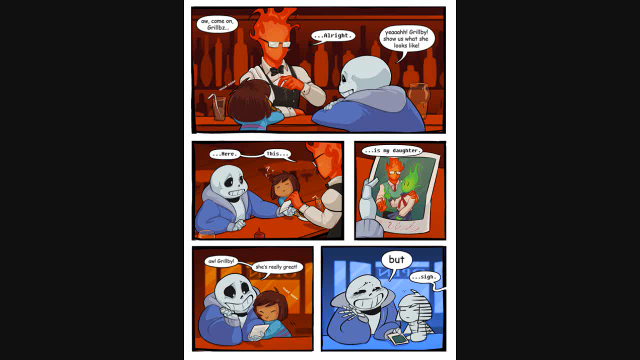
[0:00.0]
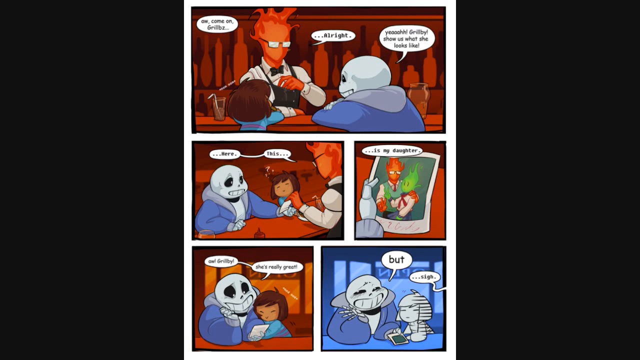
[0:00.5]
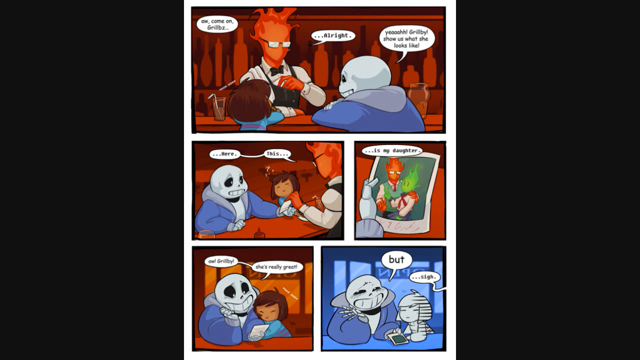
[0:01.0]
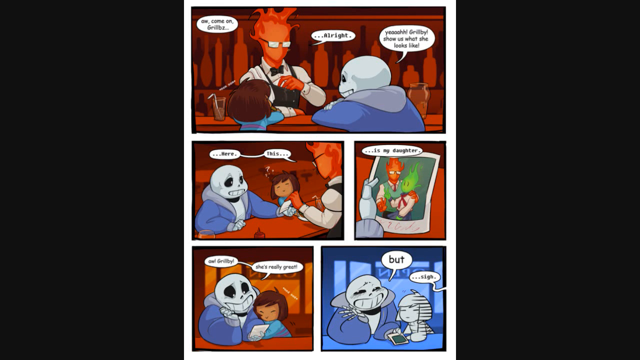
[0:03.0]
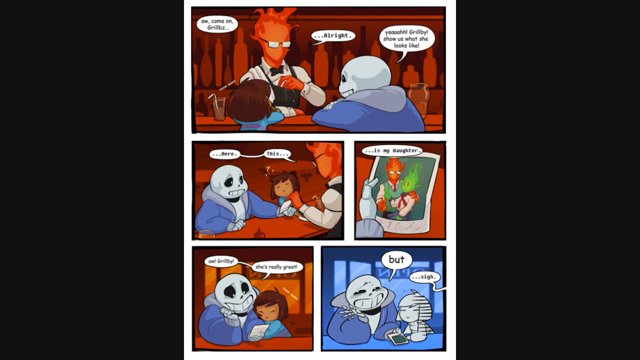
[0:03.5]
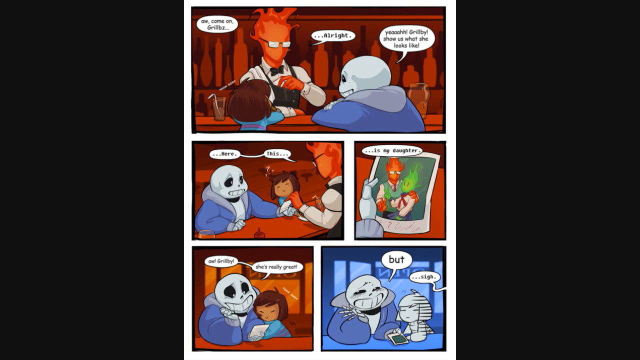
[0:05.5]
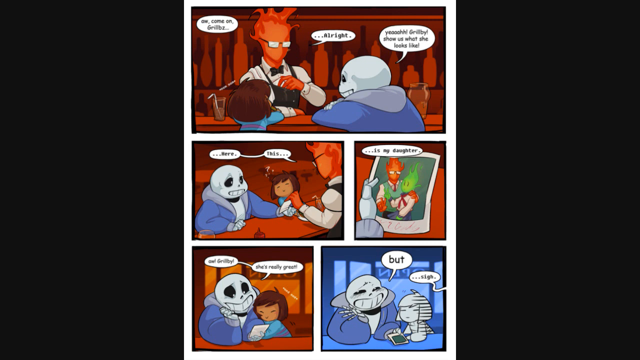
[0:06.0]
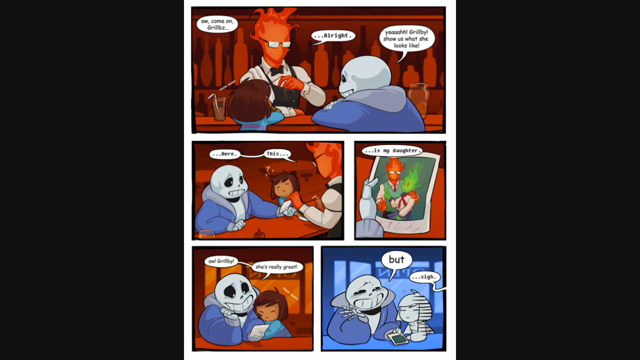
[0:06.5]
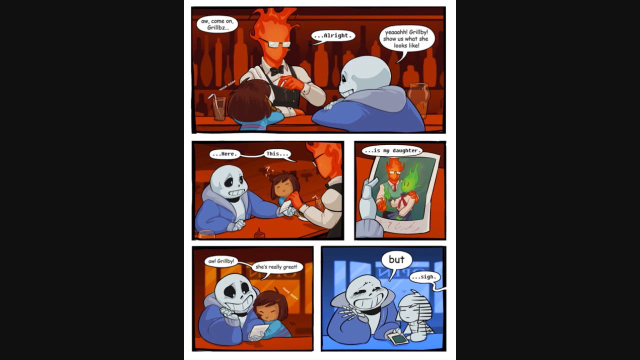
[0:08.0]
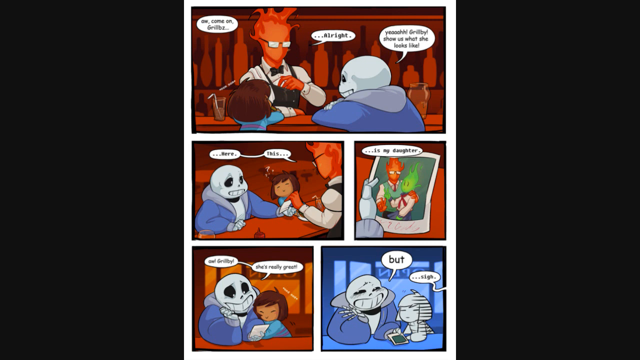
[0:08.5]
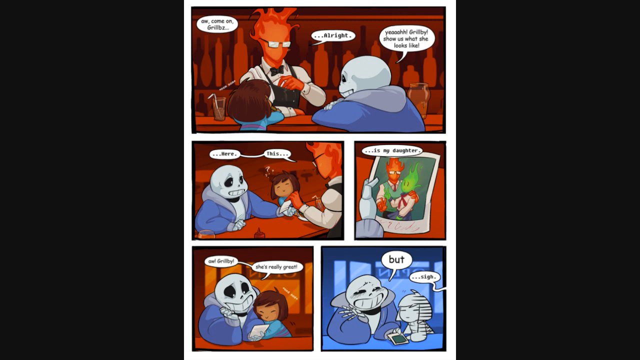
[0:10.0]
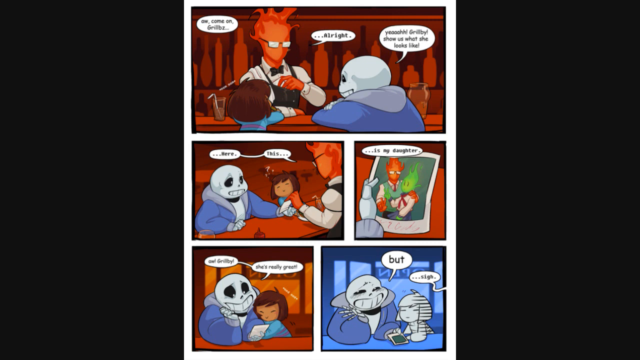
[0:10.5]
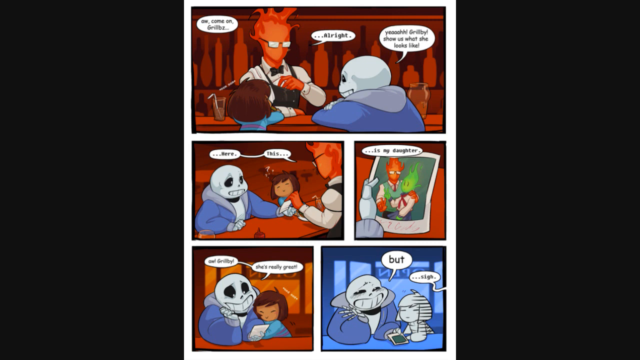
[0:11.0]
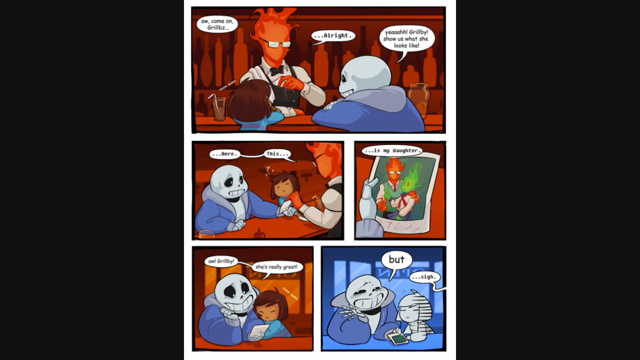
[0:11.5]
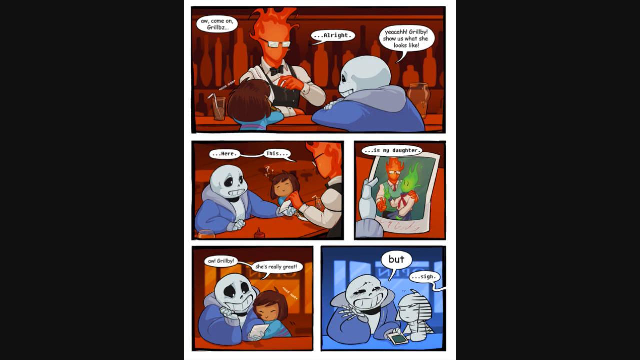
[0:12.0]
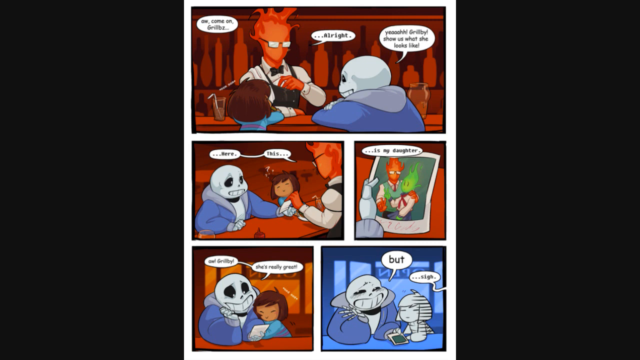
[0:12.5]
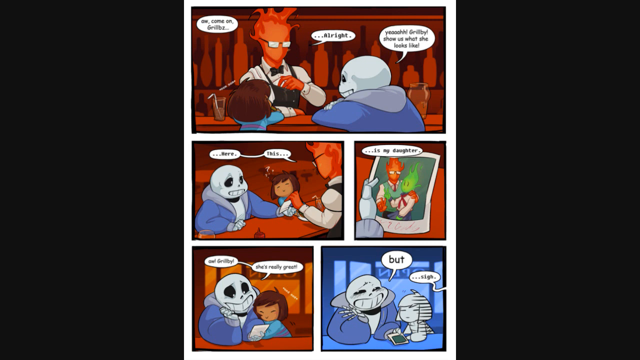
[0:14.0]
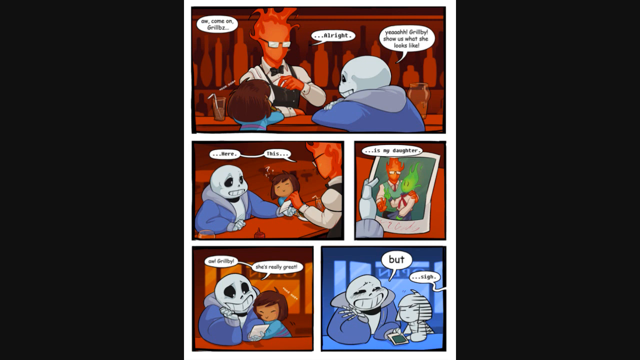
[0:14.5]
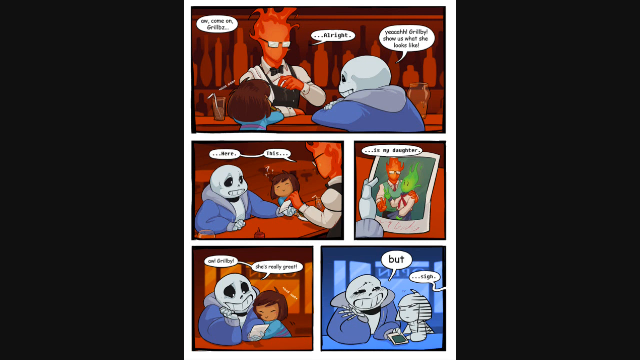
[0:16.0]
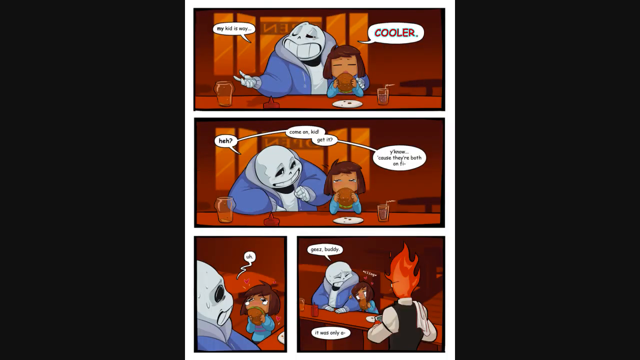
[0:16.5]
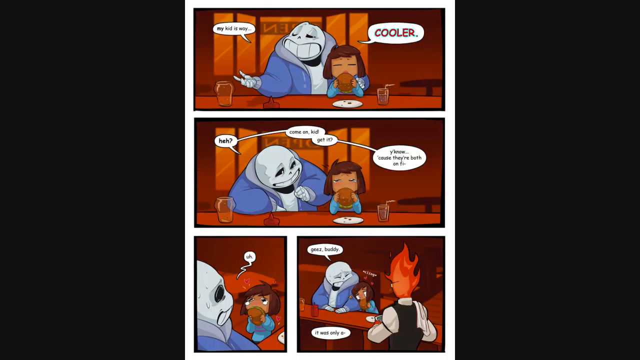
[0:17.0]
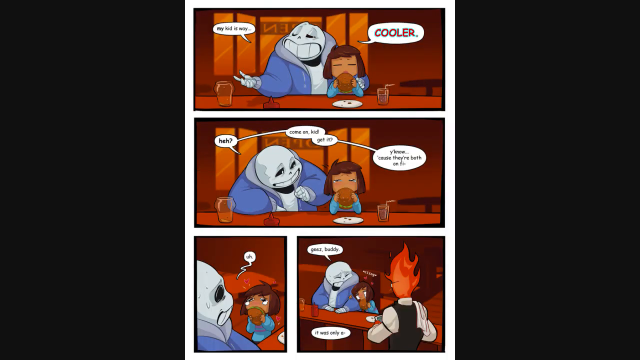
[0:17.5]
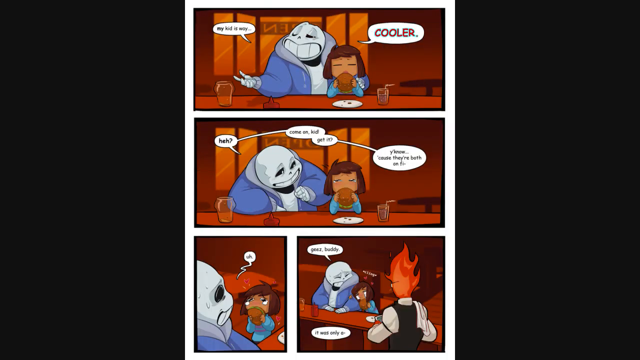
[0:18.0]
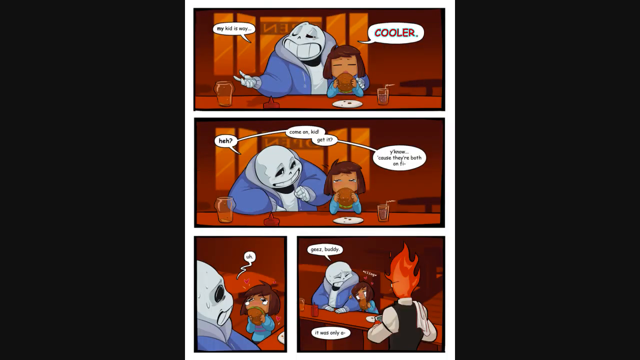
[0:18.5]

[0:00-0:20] A comic strip shows three main individuals who seem to be having a genuine conversation with each other. One of them asks the bartender to reveal something, and they all seem keen as they urge him to show them. The bartender eventually gives in and shows them a photograph of himself and his daughter, mentioning that this is his daughter and himself. The friend who takes the photo admires both him and the daughter, and they compliment the daughter, saying that she is great. A friend then makes a joke, a play on words, saying that his kid is cooler, in reference to the bartender and his daughter being made of fire.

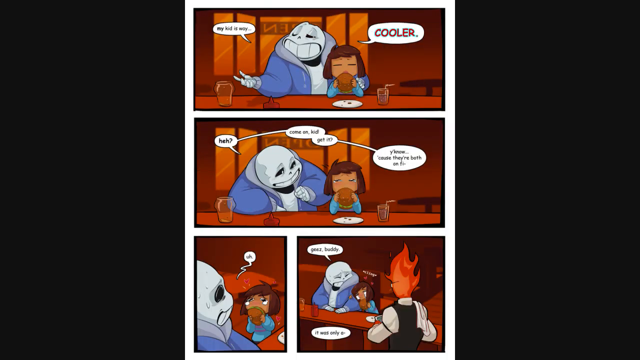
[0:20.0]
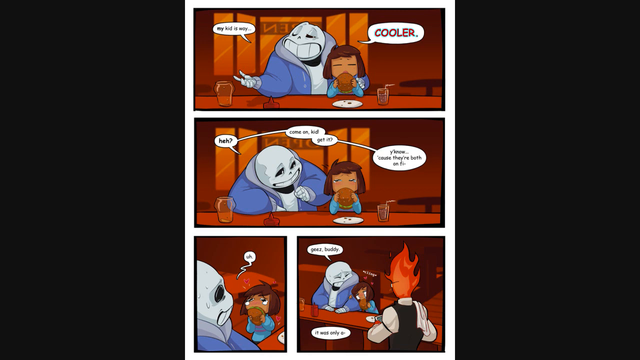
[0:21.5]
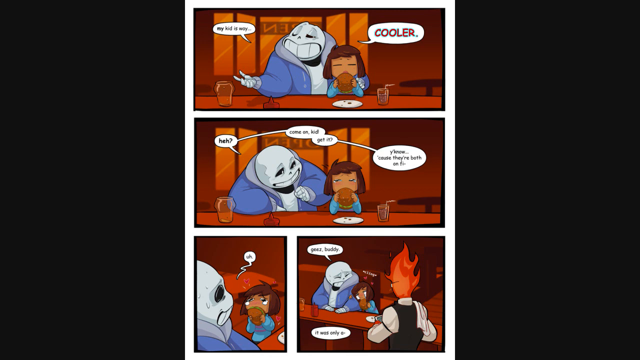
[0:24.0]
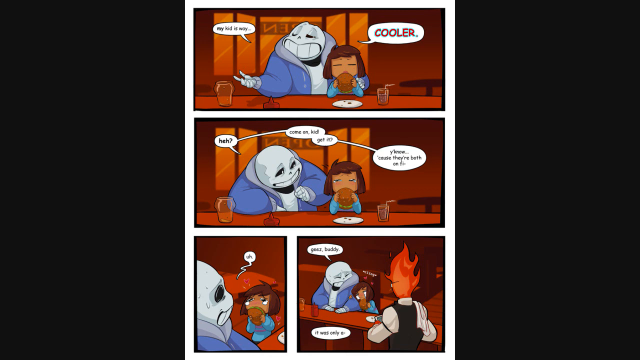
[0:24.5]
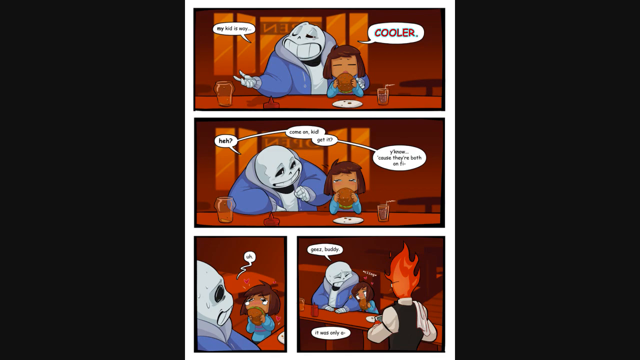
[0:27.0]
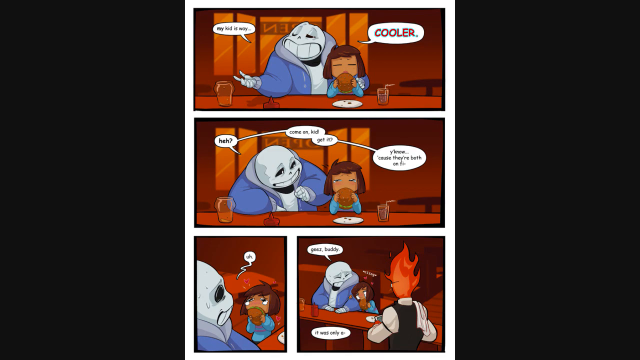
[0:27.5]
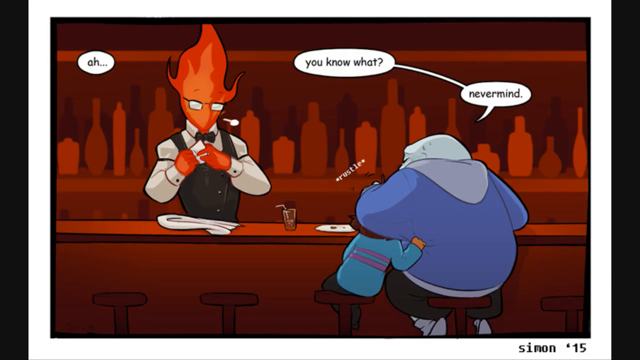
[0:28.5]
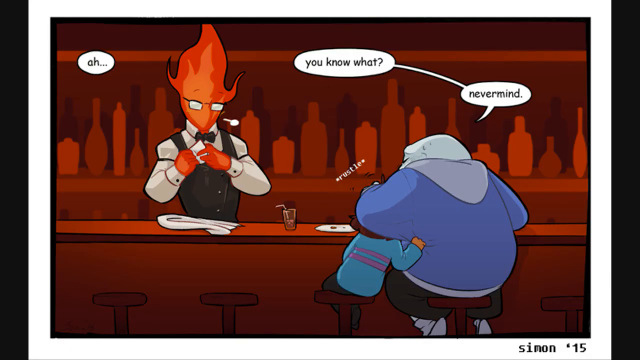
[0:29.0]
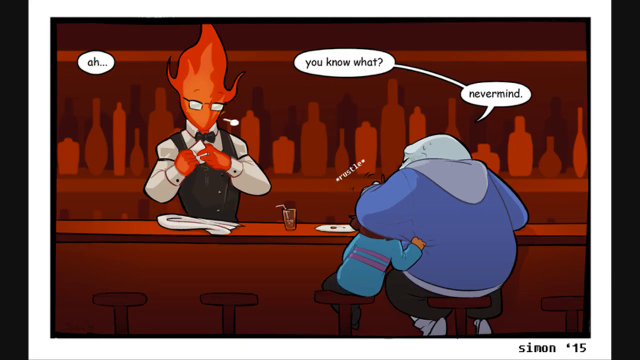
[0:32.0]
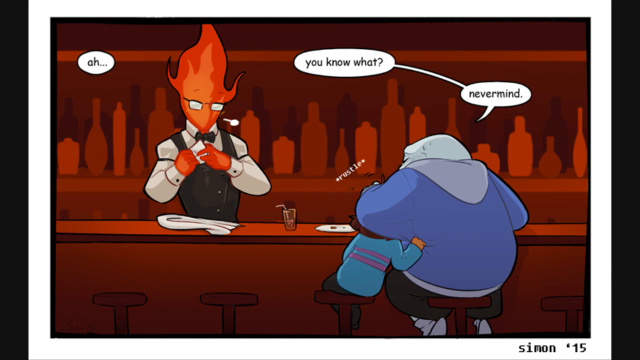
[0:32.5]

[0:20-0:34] The friend who told the joke tries to engage with the kid and asks whether she understood the joke, but the girl turns around and starts crying, which confuses the dad. The video then changes to a different comic strip showing mainly the bartender and the guy who was joking around. The girl is now in his arms, and he seems to be consoling her; he tells her not to mind what he said as she rests in his arms. Meanwhile, the bartender takes his picture and puts it back into his pocket.